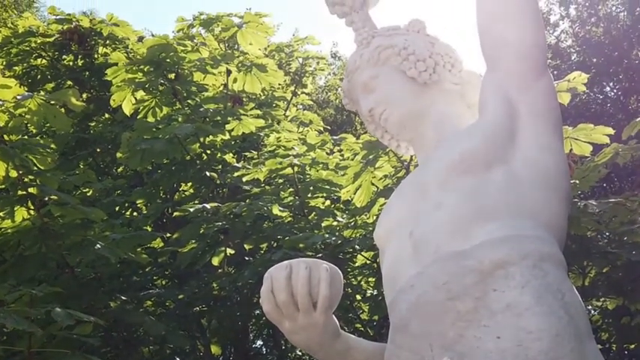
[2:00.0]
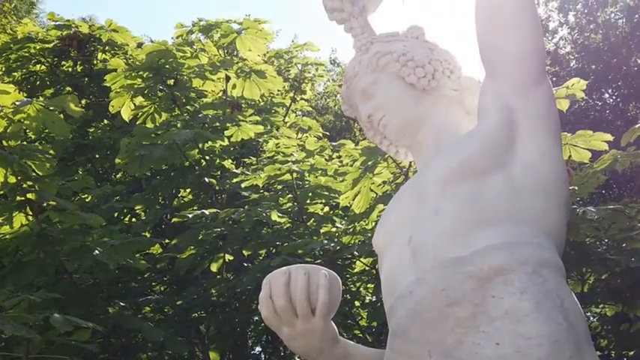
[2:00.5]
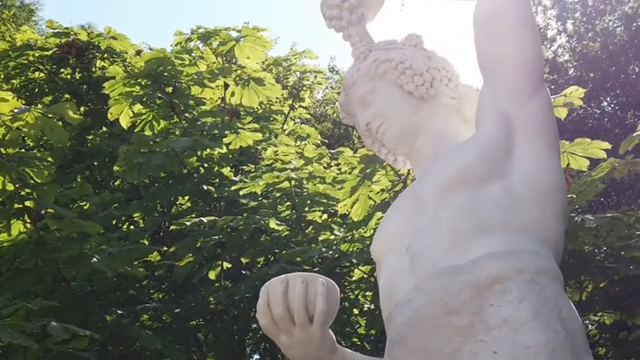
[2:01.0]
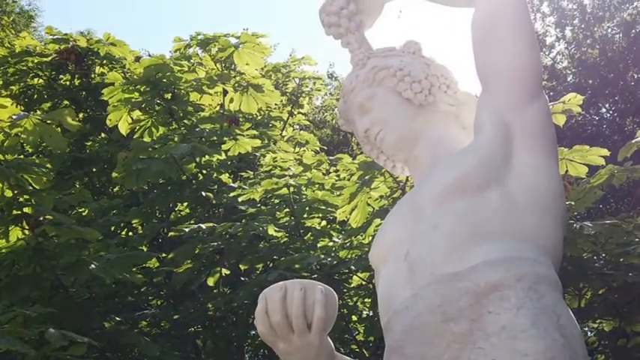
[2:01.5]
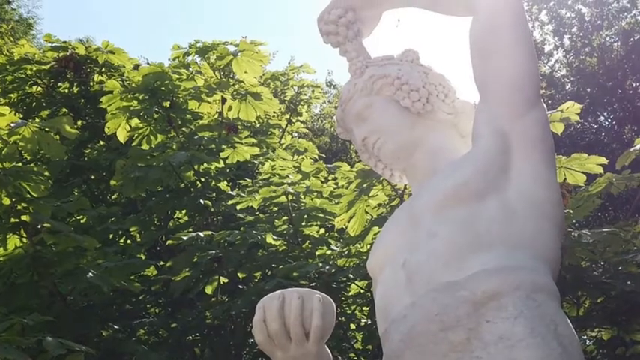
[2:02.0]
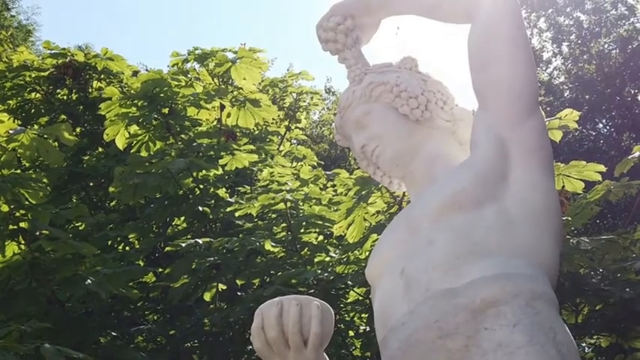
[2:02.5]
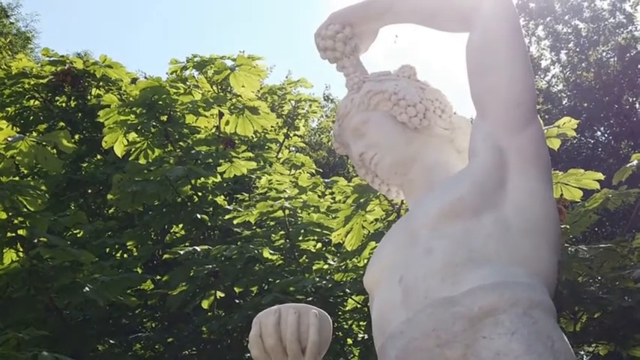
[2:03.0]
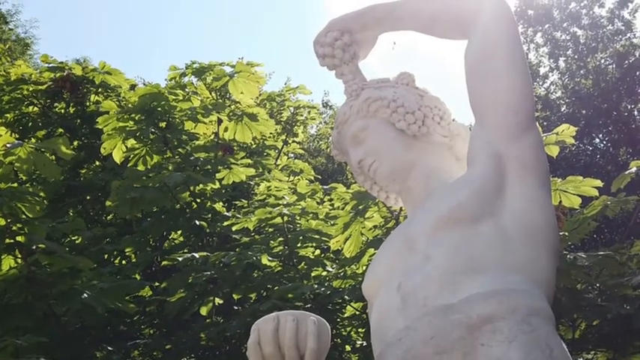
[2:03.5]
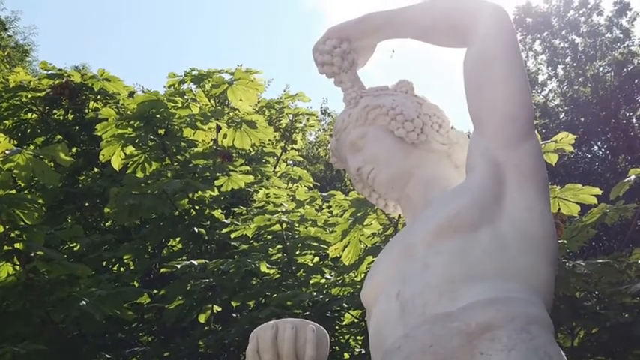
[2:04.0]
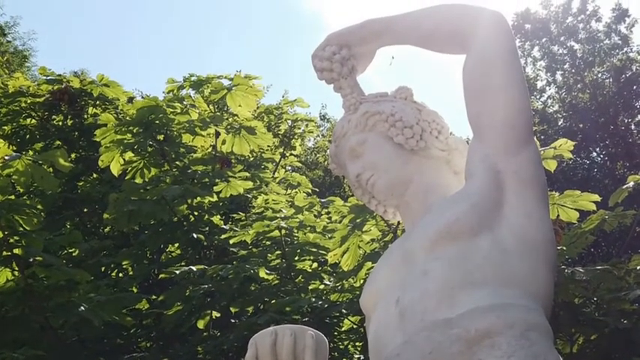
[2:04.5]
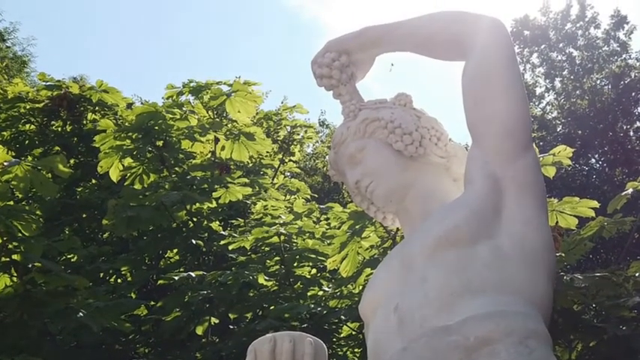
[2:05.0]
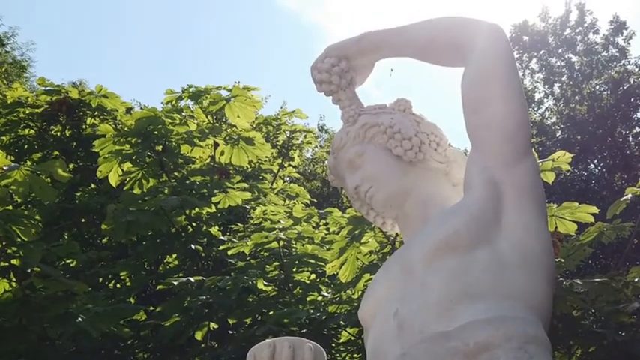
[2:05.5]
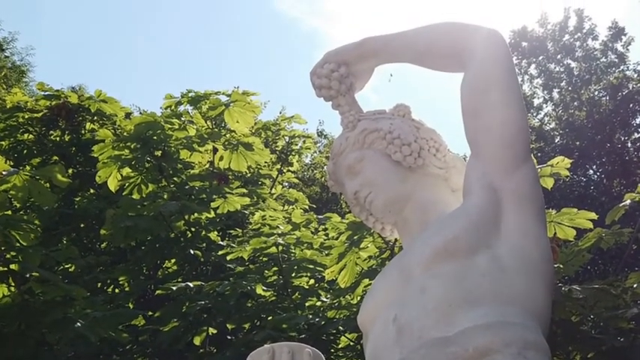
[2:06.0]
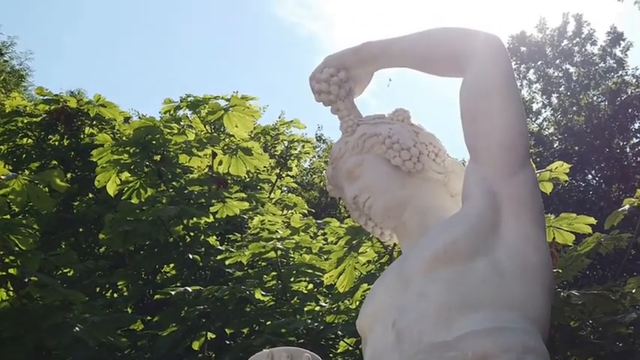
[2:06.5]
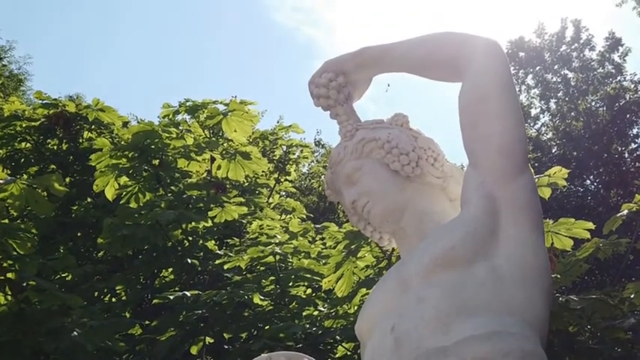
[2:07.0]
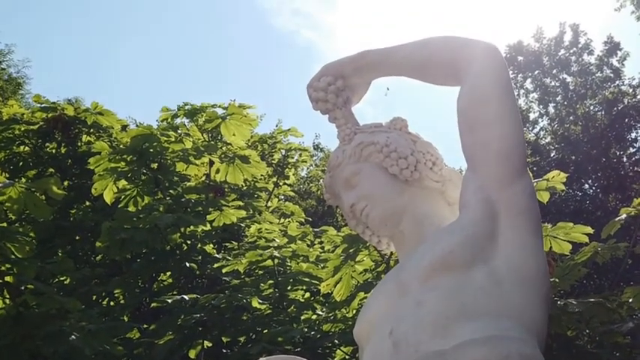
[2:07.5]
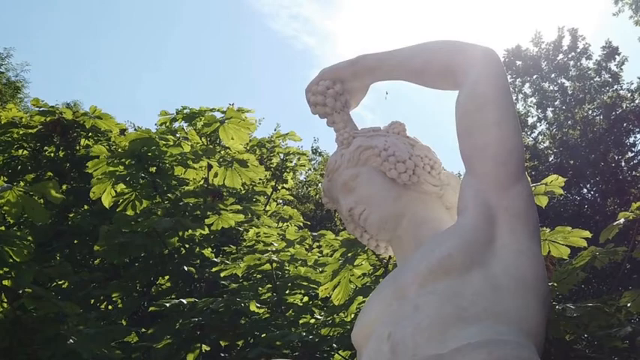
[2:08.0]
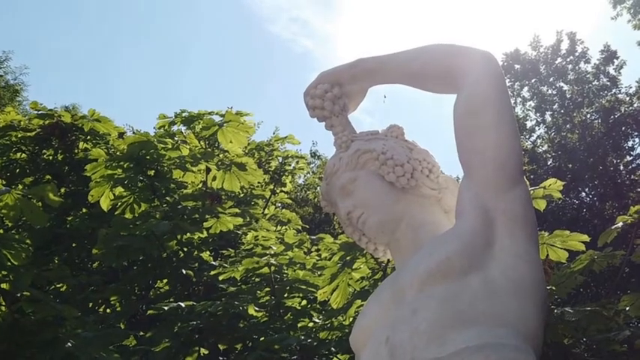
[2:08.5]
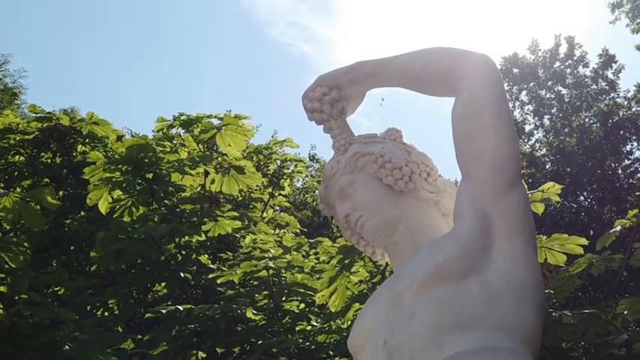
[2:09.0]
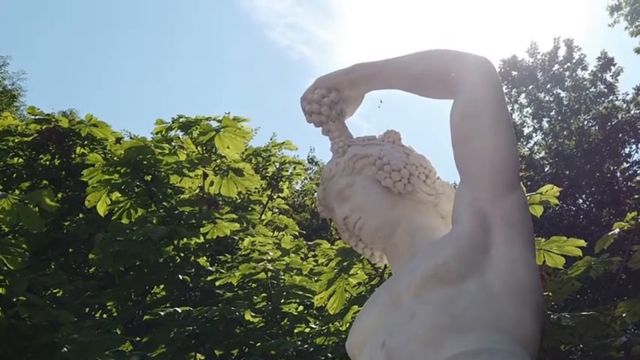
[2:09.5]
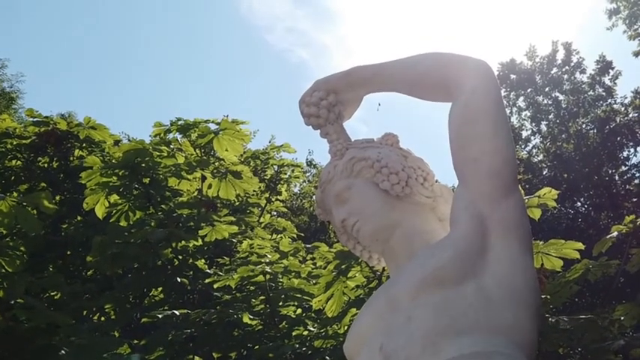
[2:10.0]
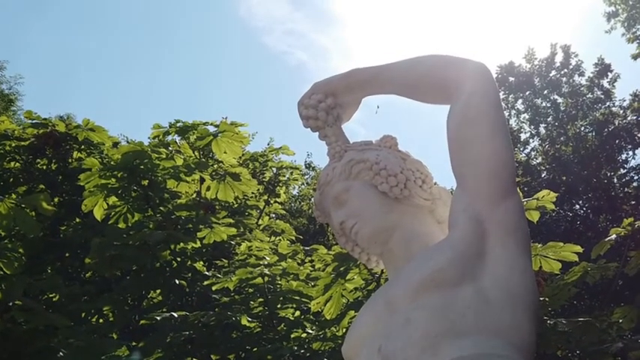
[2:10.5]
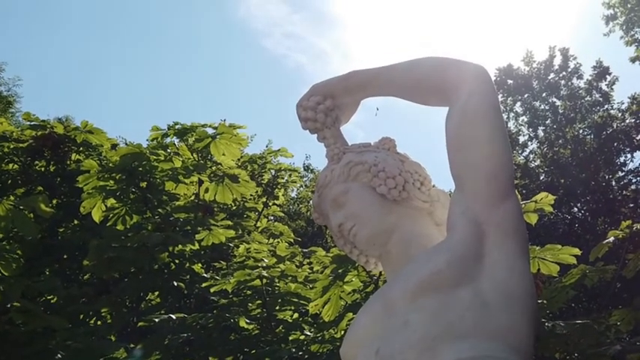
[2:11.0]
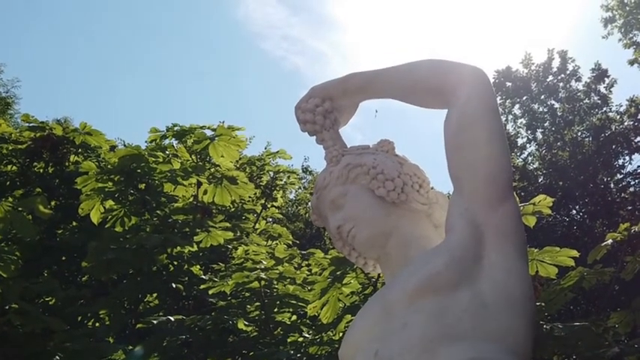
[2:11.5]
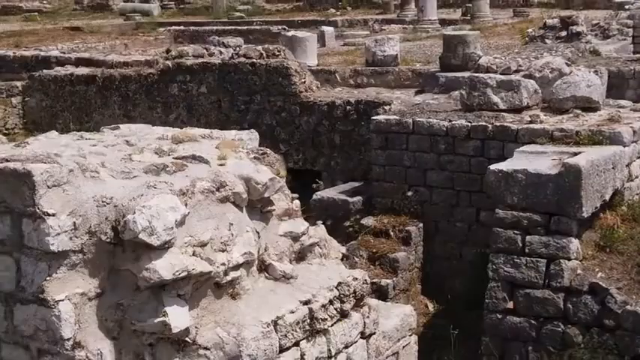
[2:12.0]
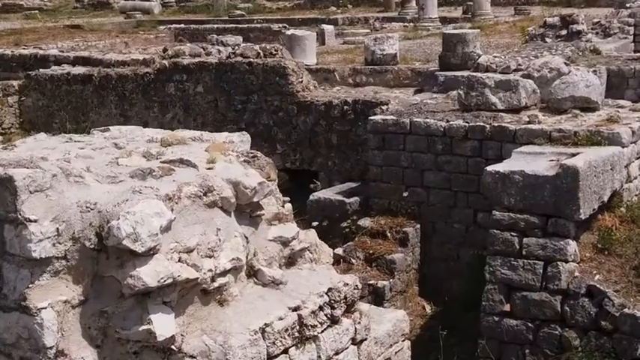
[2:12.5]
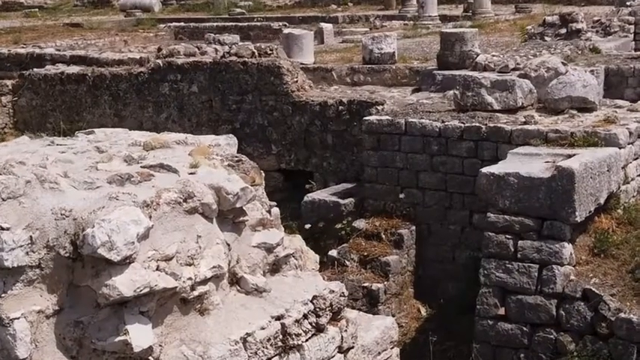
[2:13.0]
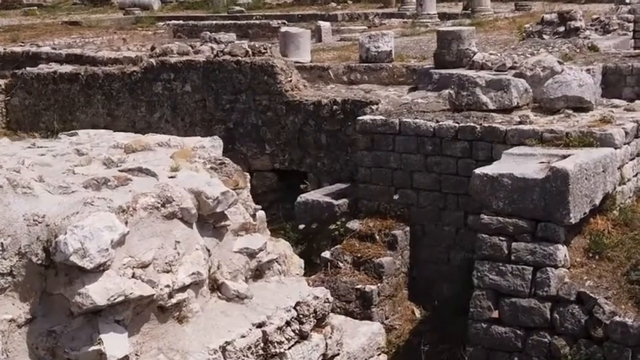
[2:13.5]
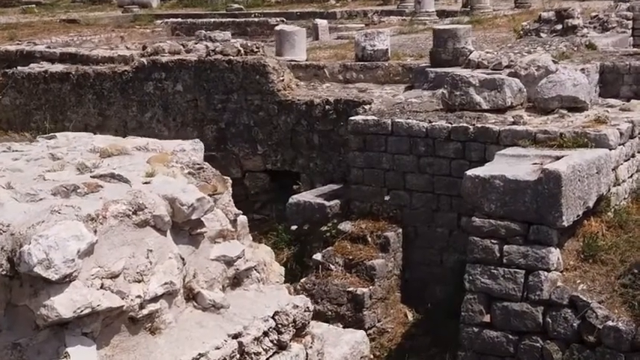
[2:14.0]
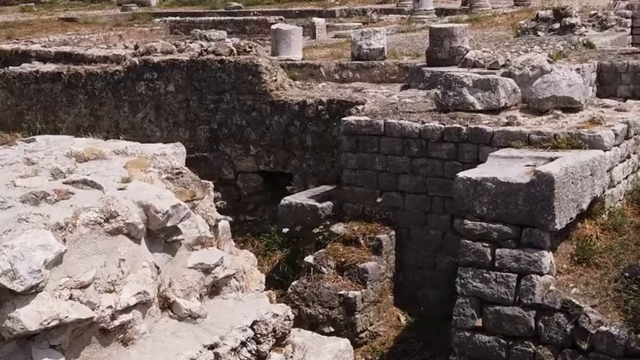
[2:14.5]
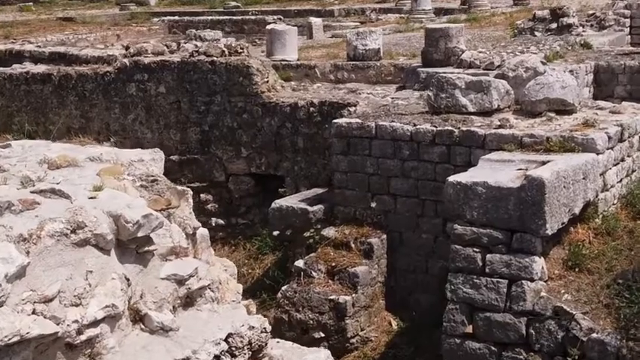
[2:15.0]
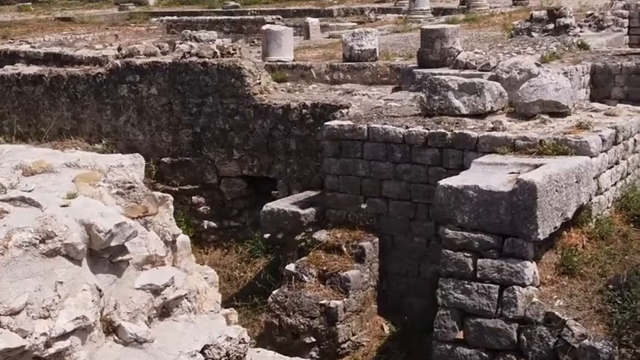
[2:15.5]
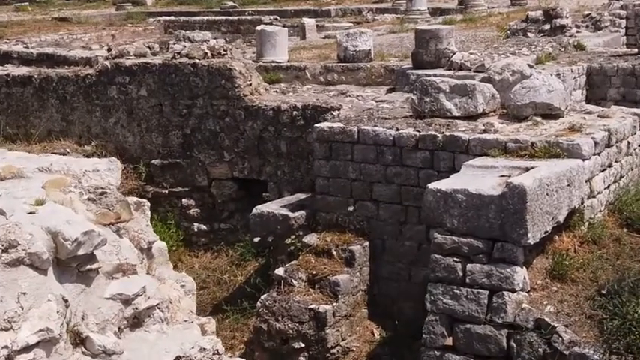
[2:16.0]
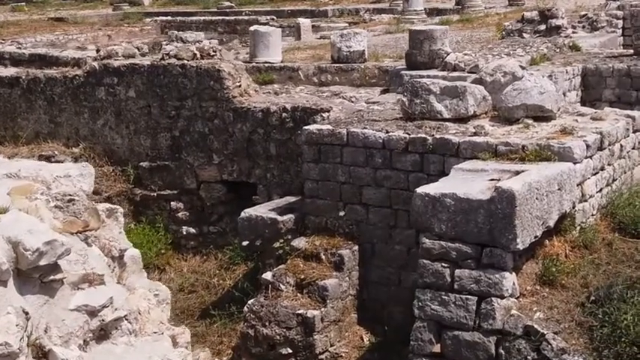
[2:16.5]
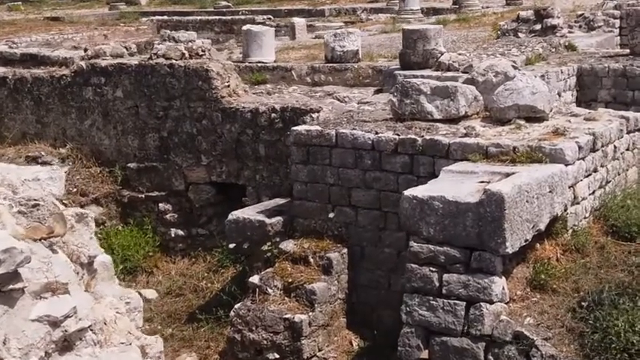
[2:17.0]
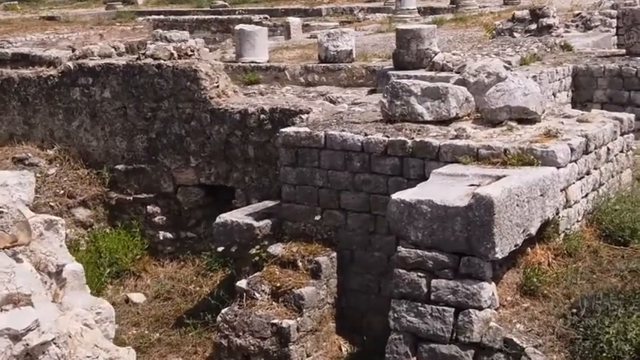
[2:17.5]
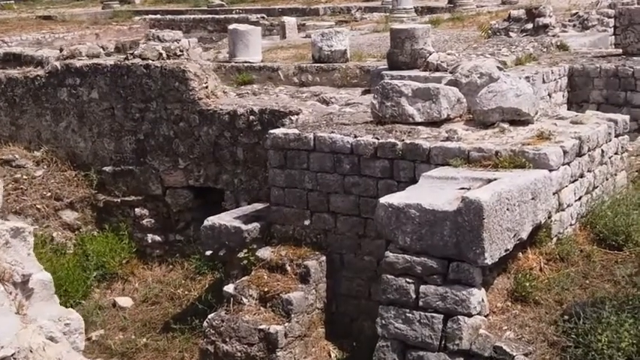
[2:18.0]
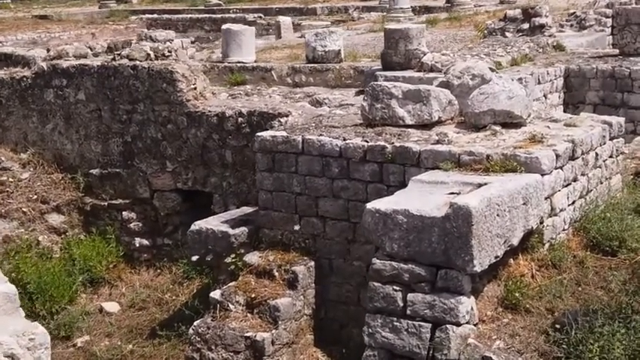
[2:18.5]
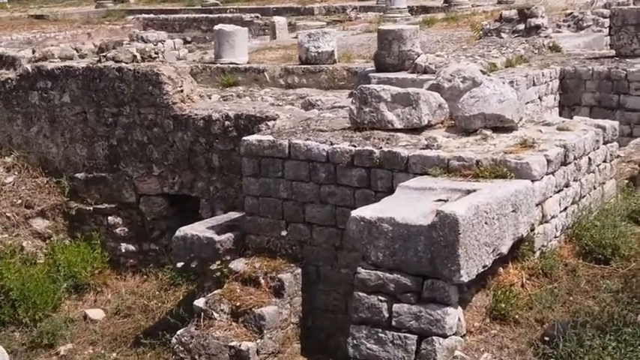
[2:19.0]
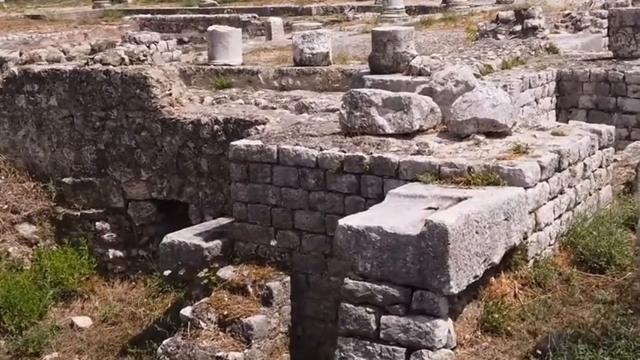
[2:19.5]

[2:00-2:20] A white marble statue of the god of wine, Dionysus, stands with one arm over his head, holding a bunch of grapes that touch the top of his head, while his other arm holds a bowl open to the sky. The statue is inside a lush green park. The video also shows a ruined site where foundation rocks outline what was once a major building, and the remains of columns look like they have been cut down to only about calf height. Grass has overgrown parts of the building, and large granite rocks are scattered about the ruins, where it is possible to make out where walls and entrances to rooms maybe once were. At least six or seven round column bases remain in the area shown.